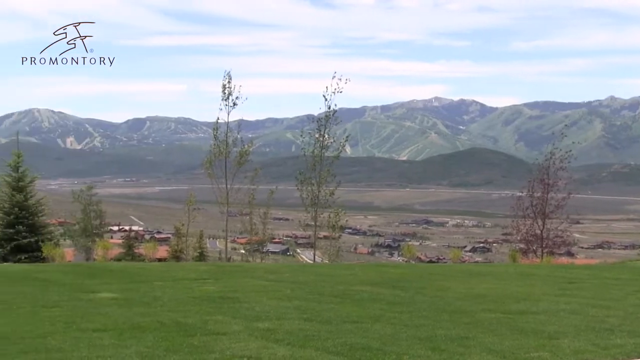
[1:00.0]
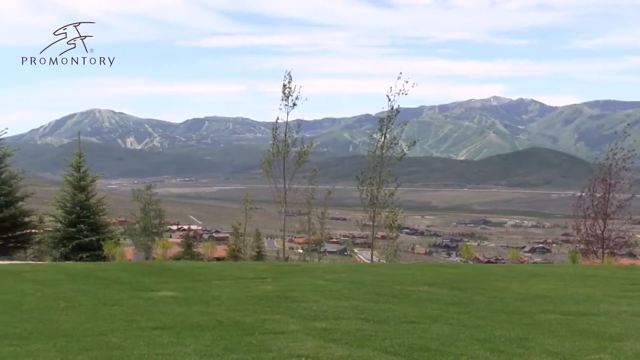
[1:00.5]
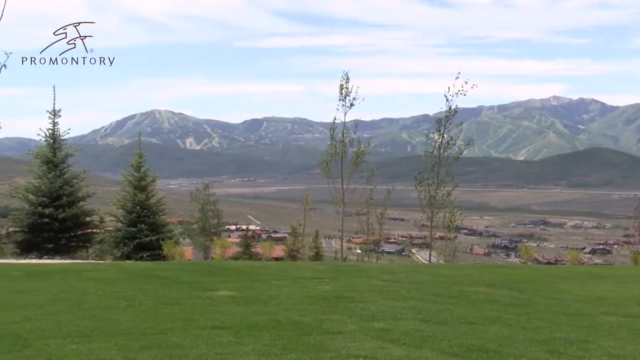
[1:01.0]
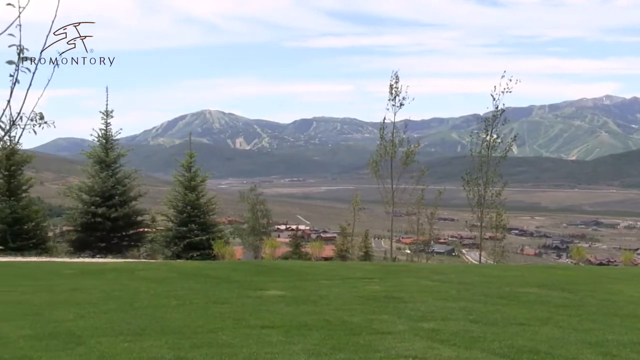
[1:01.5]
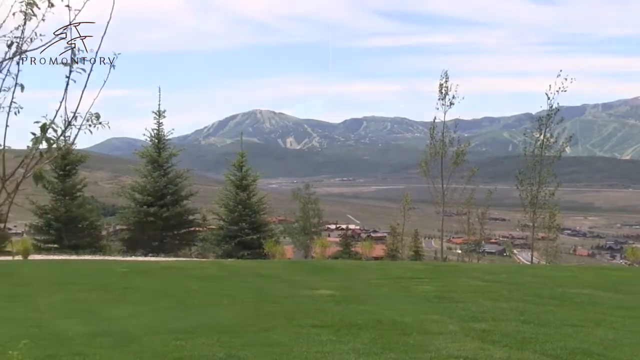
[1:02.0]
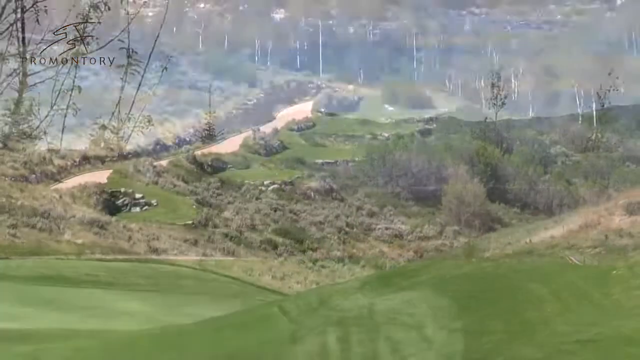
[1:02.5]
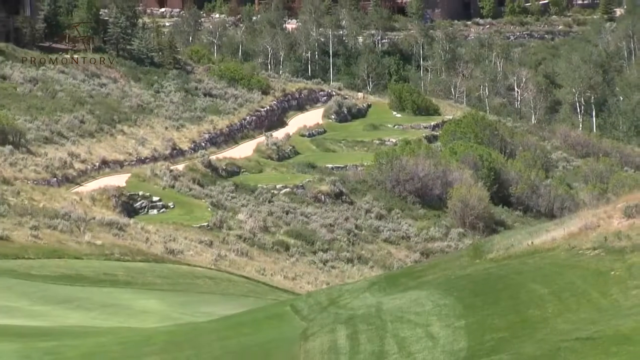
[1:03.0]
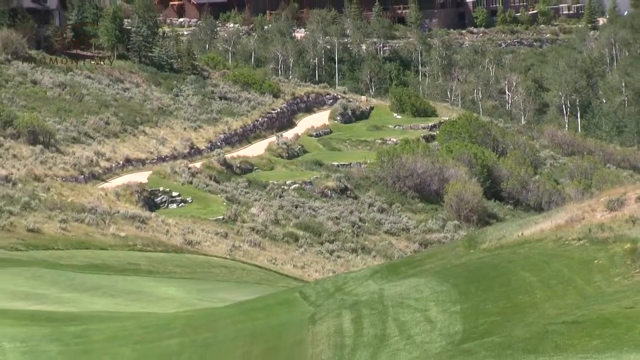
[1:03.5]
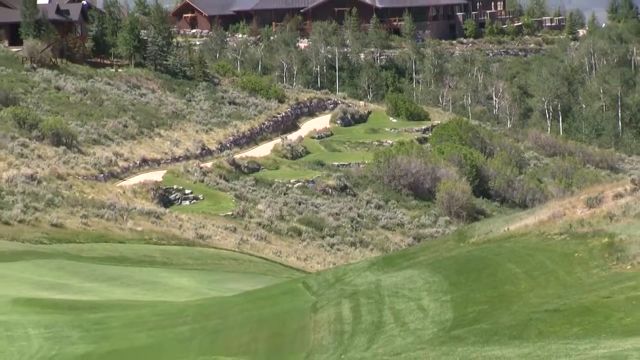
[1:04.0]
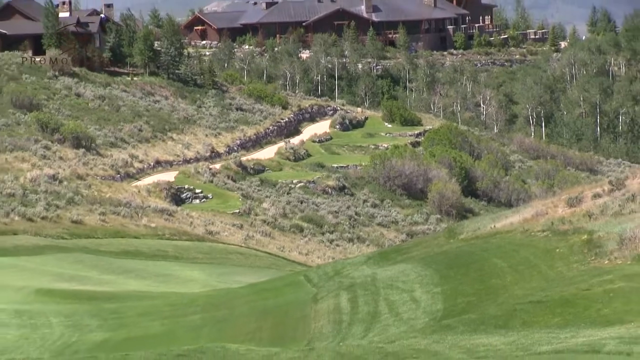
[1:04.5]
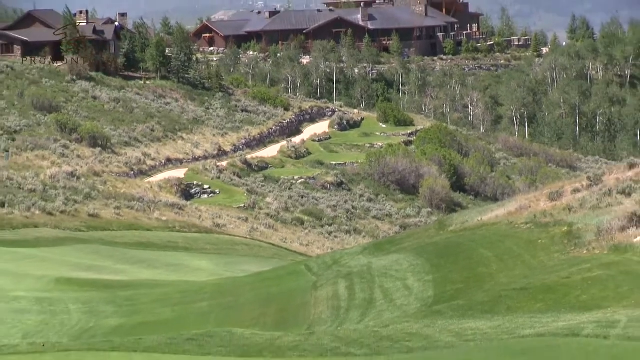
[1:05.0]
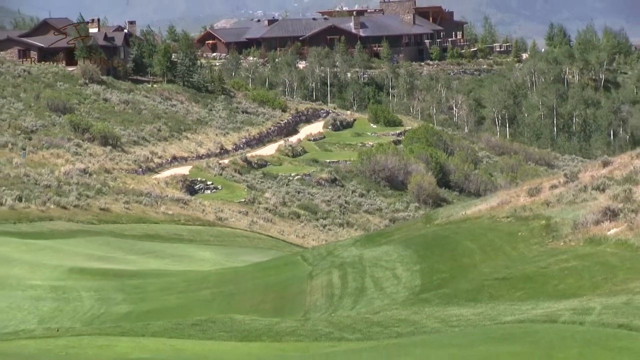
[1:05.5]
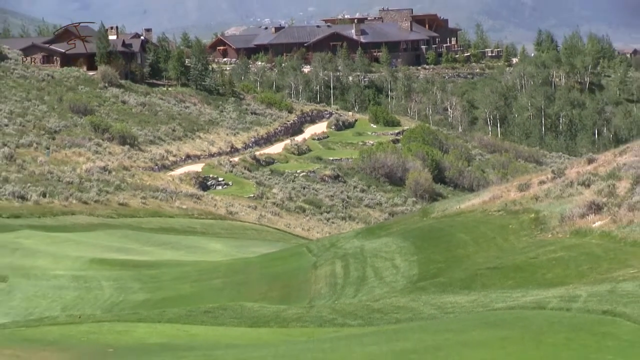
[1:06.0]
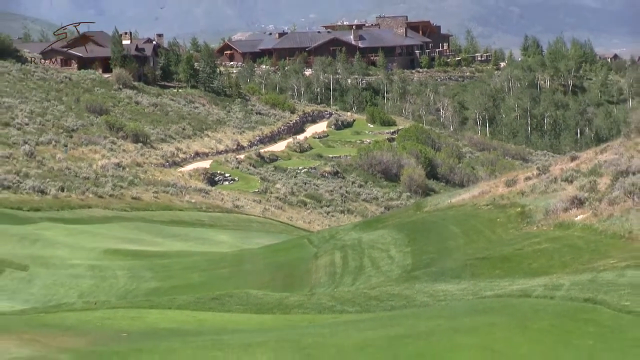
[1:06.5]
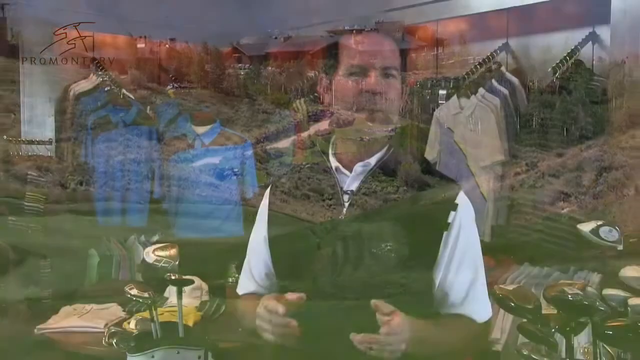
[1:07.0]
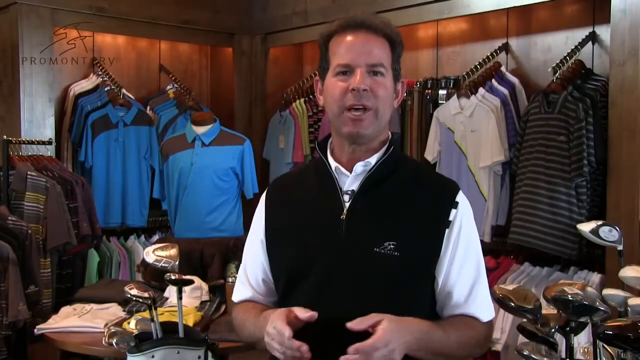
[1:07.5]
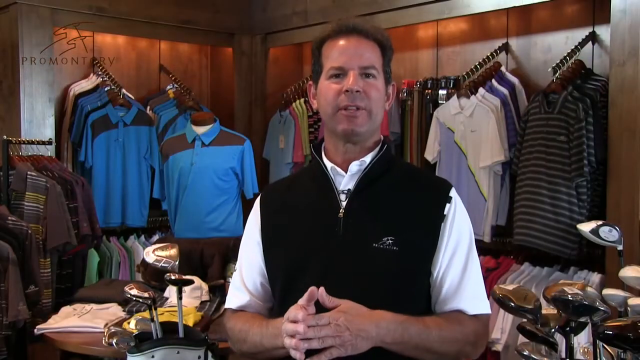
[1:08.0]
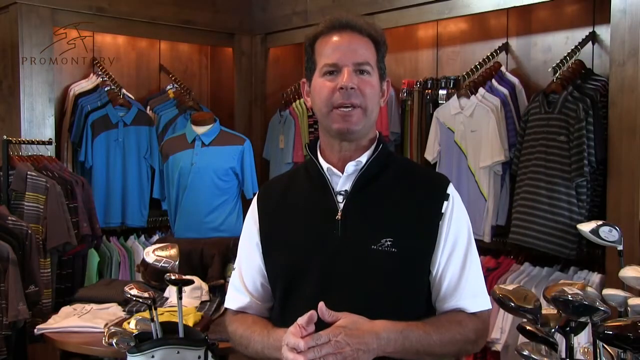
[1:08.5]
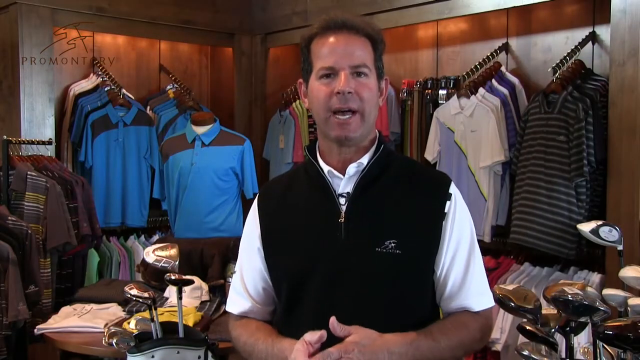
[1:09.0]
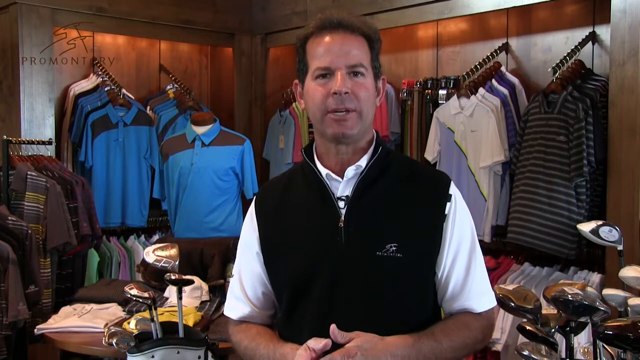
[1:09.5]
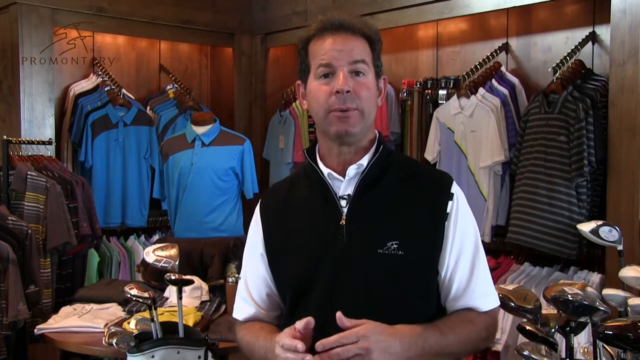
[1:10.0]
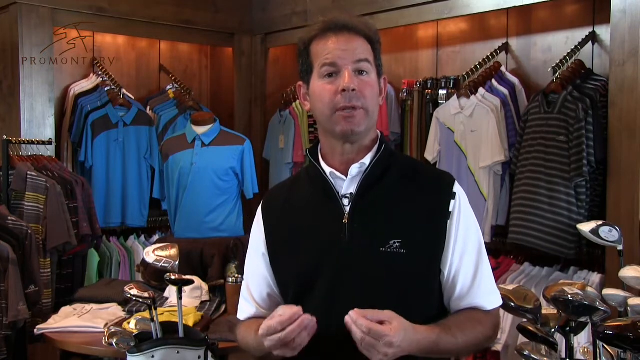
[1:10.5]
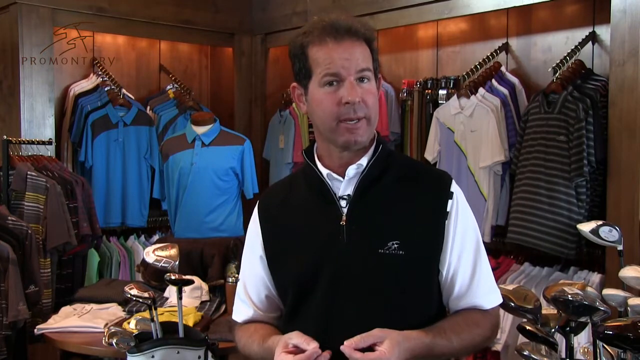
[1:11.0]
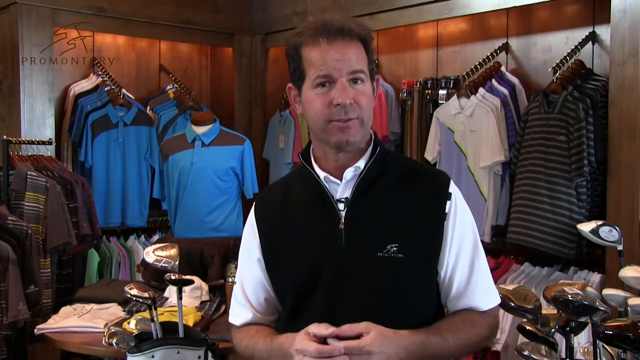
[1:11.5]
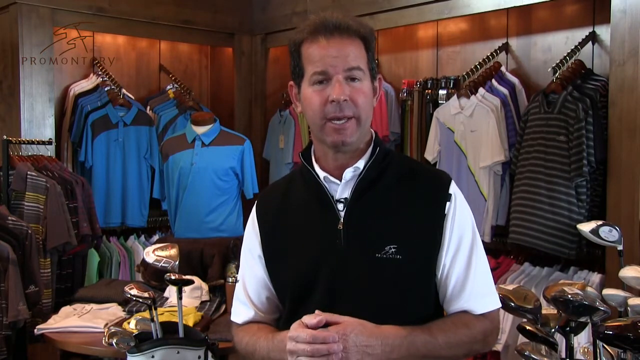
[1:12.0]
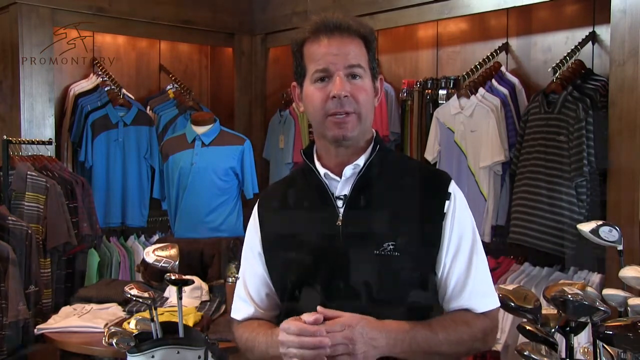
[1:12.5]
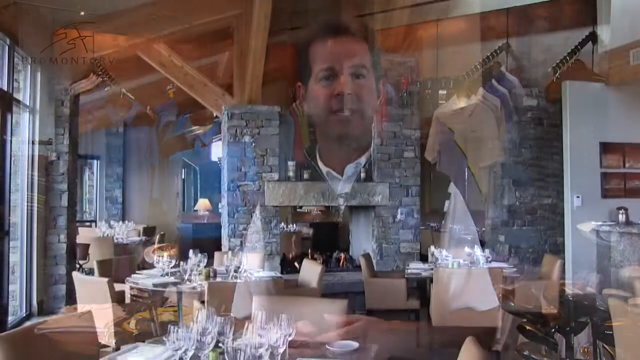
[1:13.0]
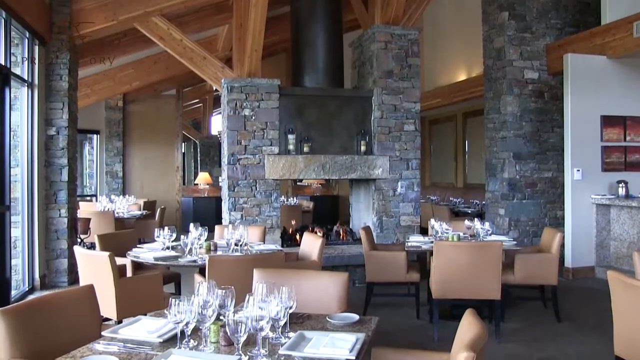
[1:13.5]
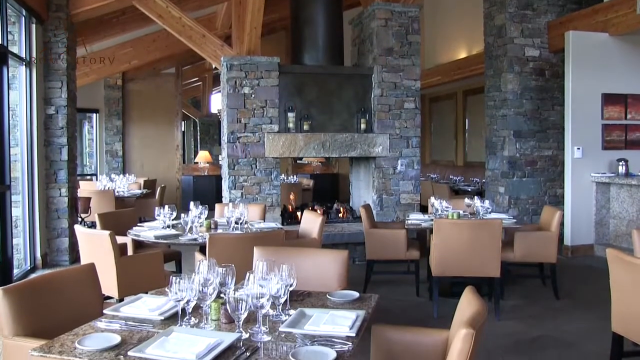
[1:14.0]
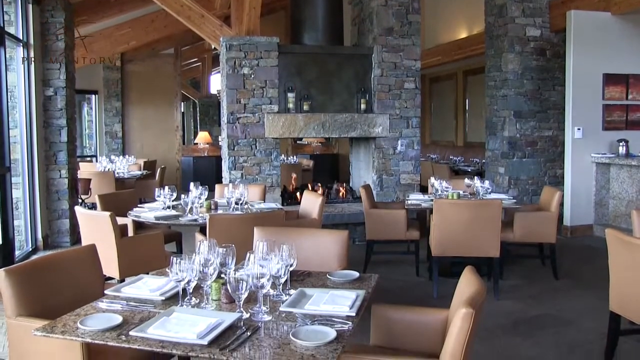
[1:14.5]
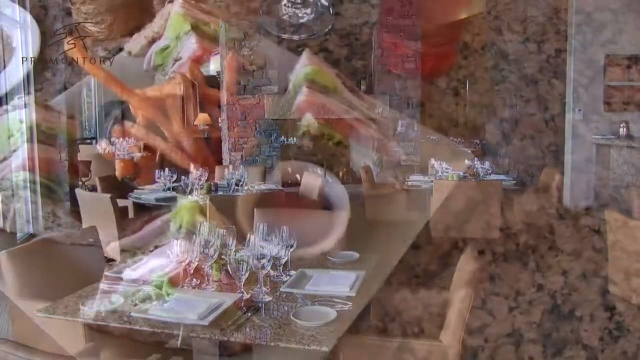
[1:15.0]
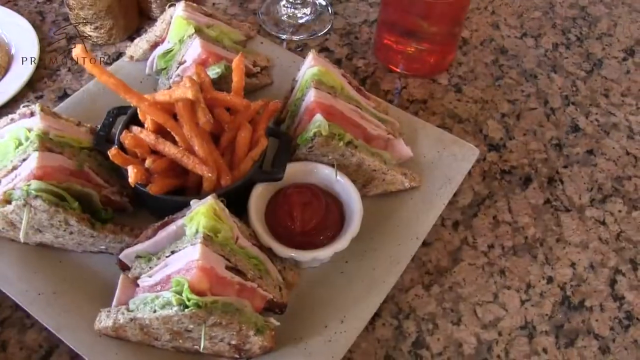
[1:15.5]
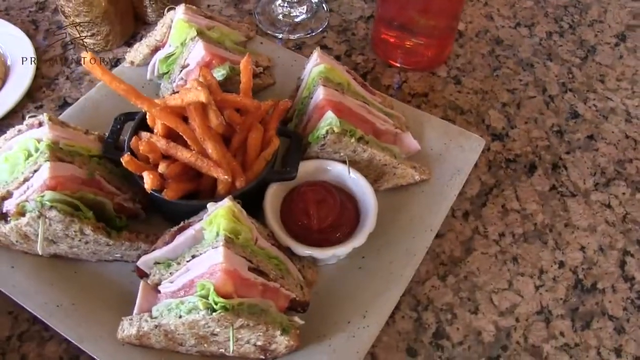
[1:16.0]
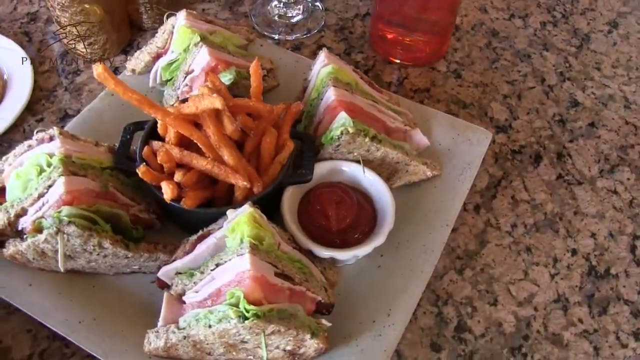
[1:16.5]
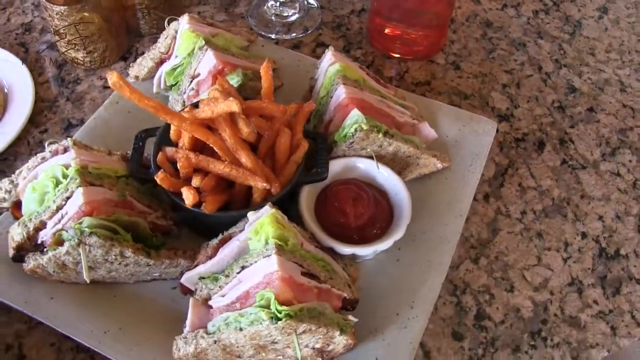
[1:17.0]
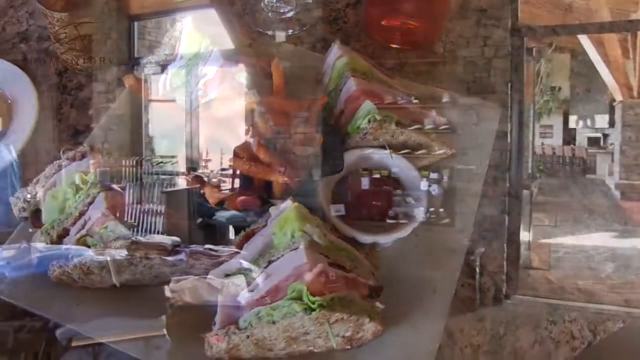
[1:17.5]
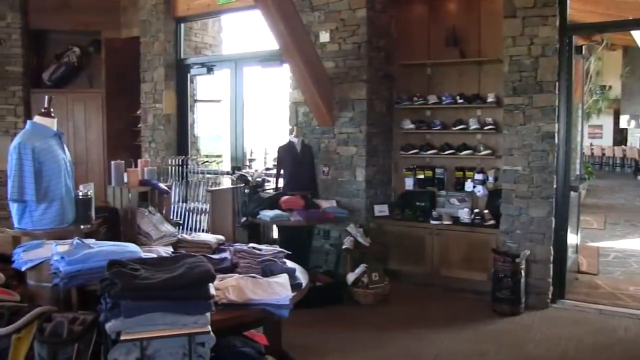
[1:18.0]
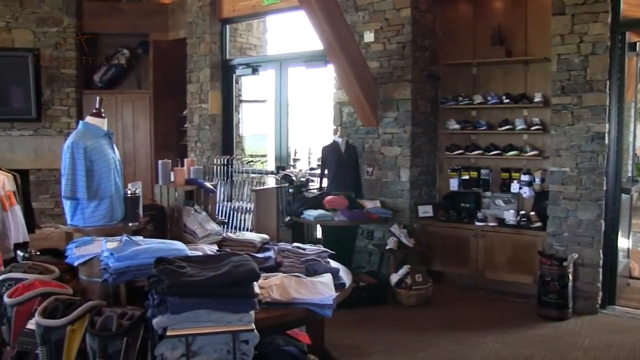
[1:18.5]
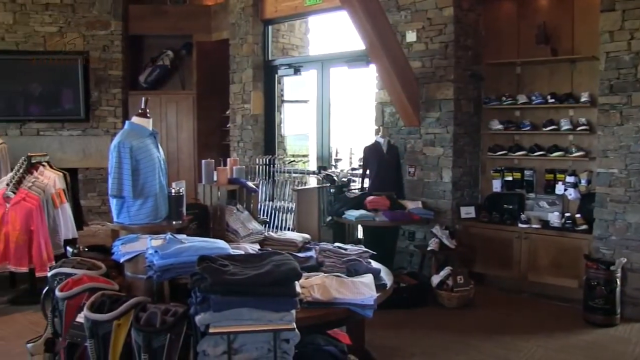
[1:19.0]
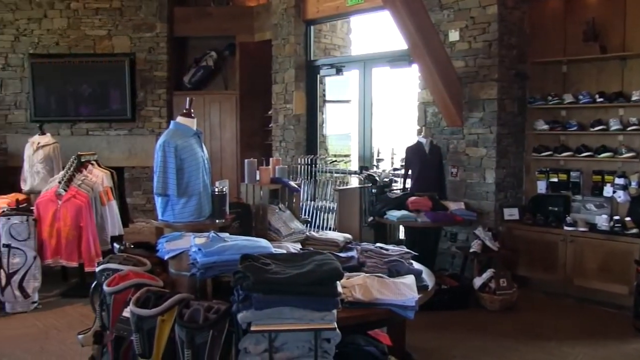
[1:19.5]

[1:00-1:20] Mountains are in the background under a blue sky with white cirrus clouds. Some thin trees are blowing, there is a pine tree on the left, and green grass is in the foreground. More of the course appears, with sagebrush and foliage, and small shrubs and bushes lining the course. In the background are a couple of buildings, apparently the golf club, and more buildings continue to be visible. There are some sand pits and the green, which is neatly cut. The camera then goes to the man talking in the gift shop, wearing the black vest with a white shirt underneath. Behind him are many styles of polo shirts, such as black and white striped, blue, purple, and white, with golf clubs poking up around him and more items for sale in the background. He has a friendly face and dark hair; his eyebrows raise as he talks and he gestures with his hands. The view switches to the dining room of the golf club, with large brick pillars, tables with many wine glasses, plates, and napkins, large windows, and a fireplace in the center of the room surrounded by gray brick pillars. A meal is shown: what looks like a club sandwich divided into fours, surrounded by sweet potato fries, with a glass of ice water and some red ketchup. The view then pans again on the gift shop, showing shoes for sale lining the wall and various clothing items.